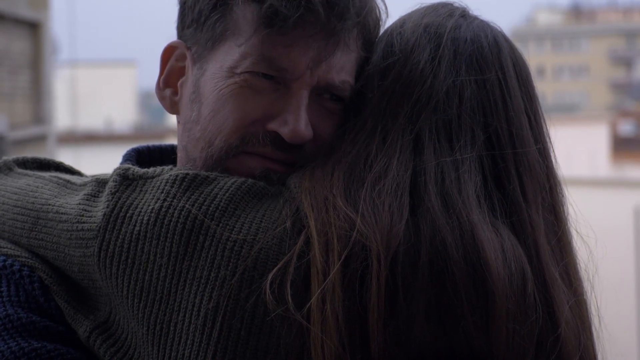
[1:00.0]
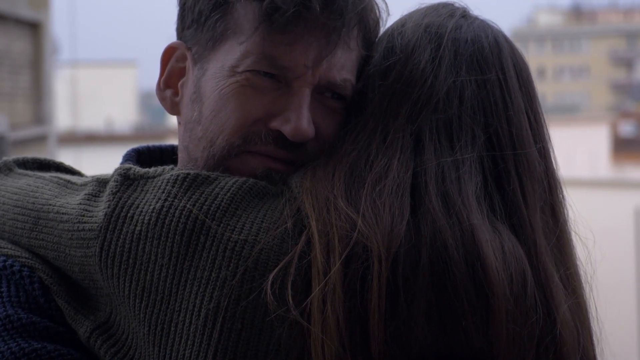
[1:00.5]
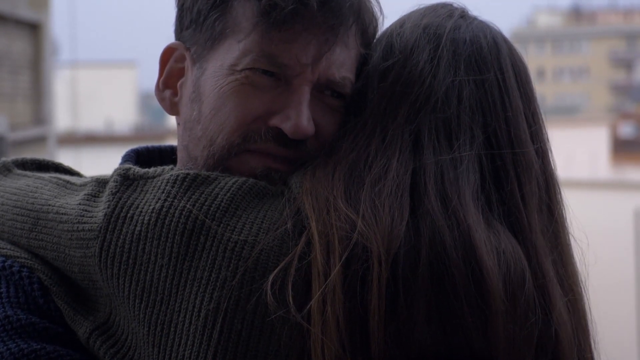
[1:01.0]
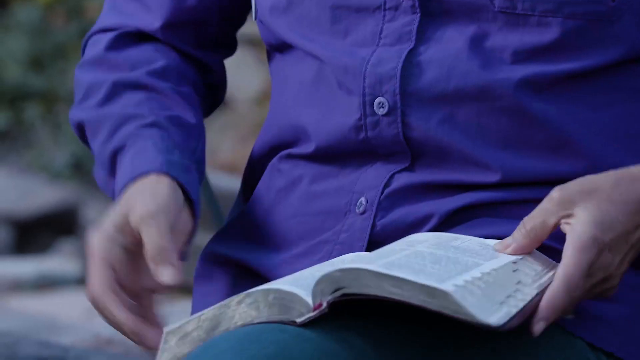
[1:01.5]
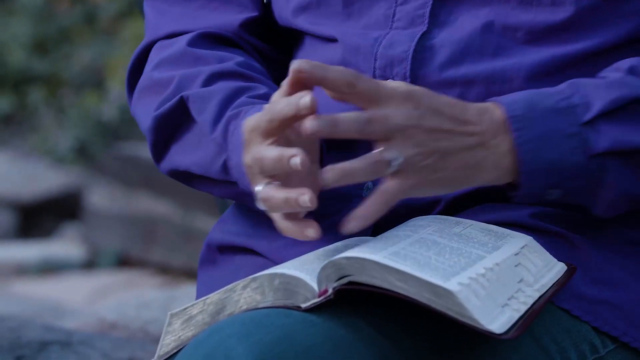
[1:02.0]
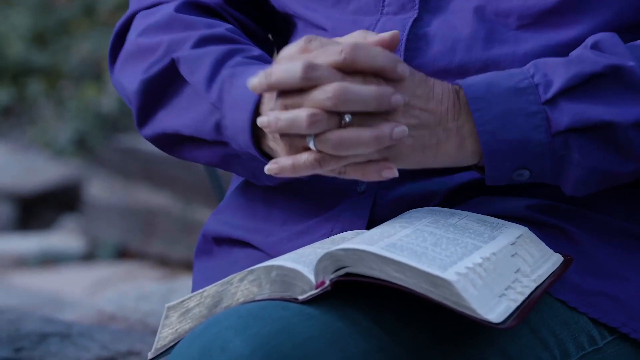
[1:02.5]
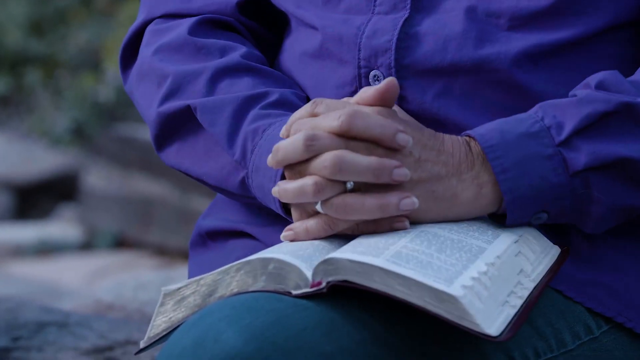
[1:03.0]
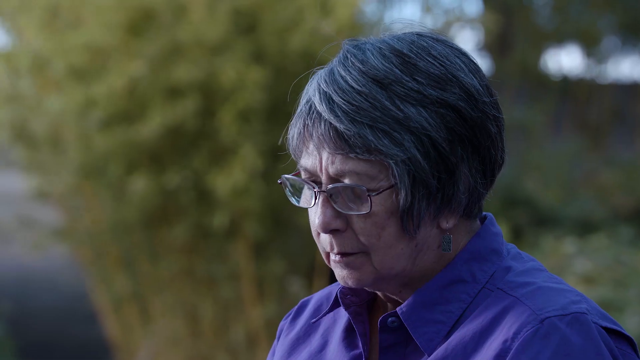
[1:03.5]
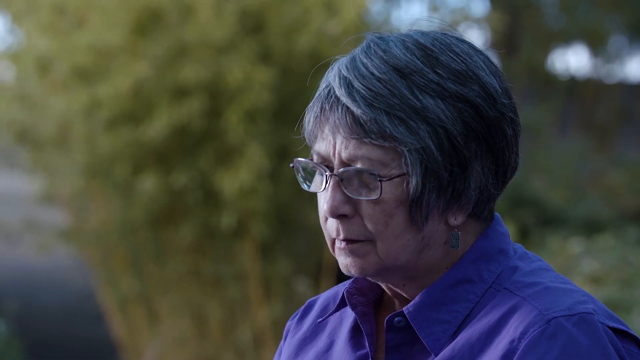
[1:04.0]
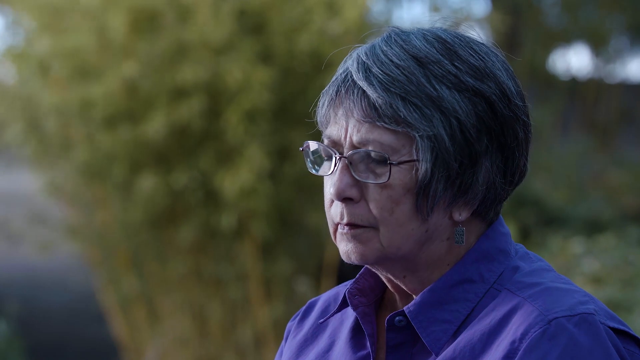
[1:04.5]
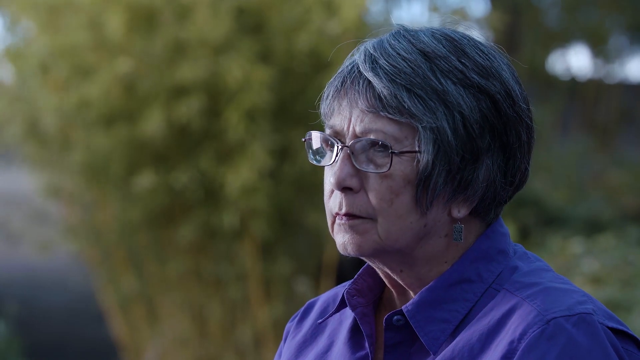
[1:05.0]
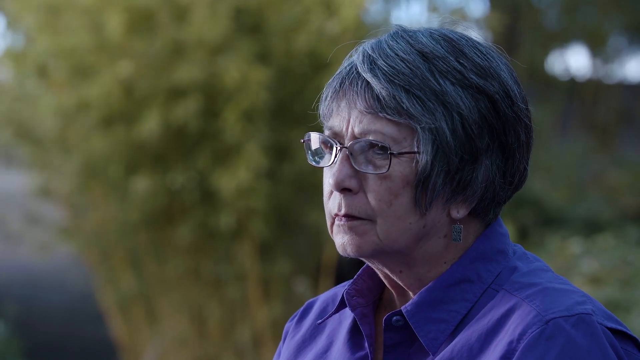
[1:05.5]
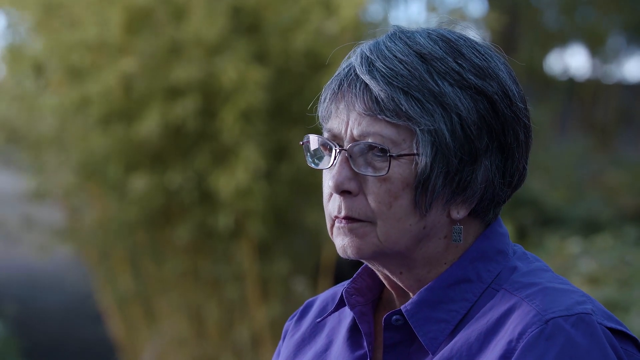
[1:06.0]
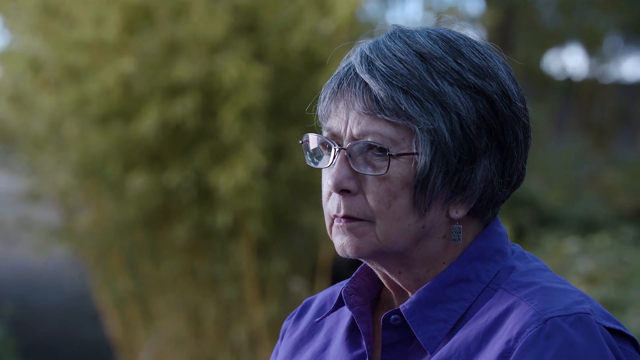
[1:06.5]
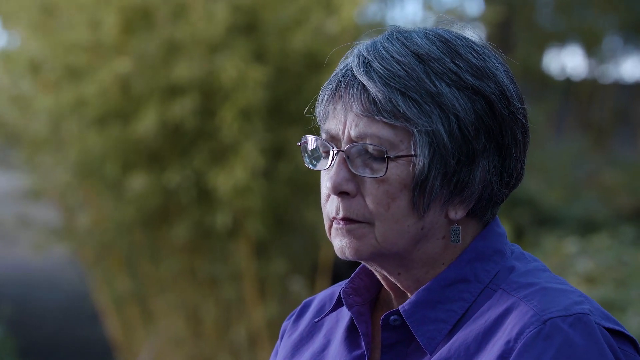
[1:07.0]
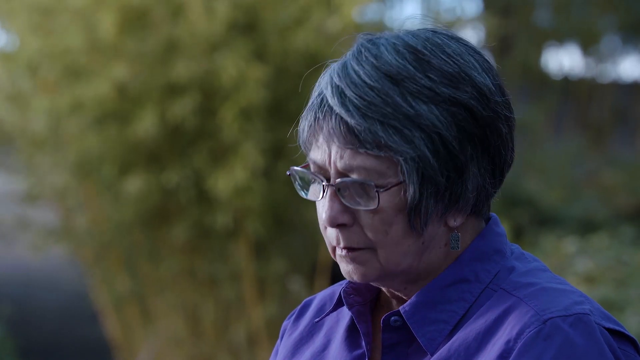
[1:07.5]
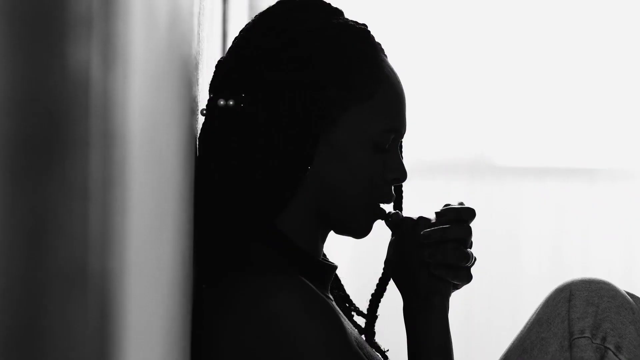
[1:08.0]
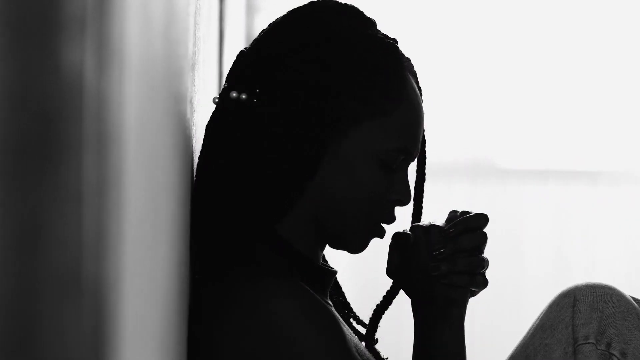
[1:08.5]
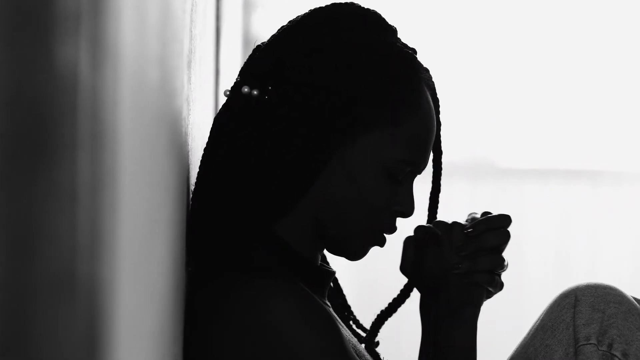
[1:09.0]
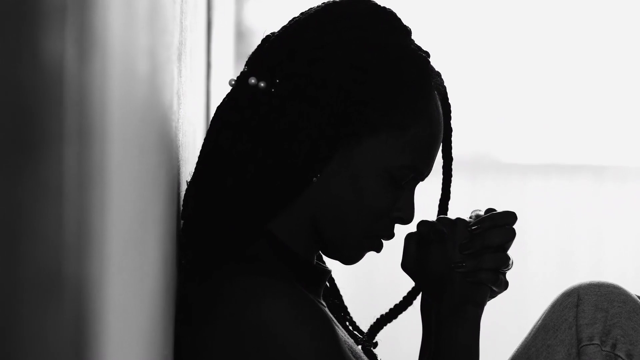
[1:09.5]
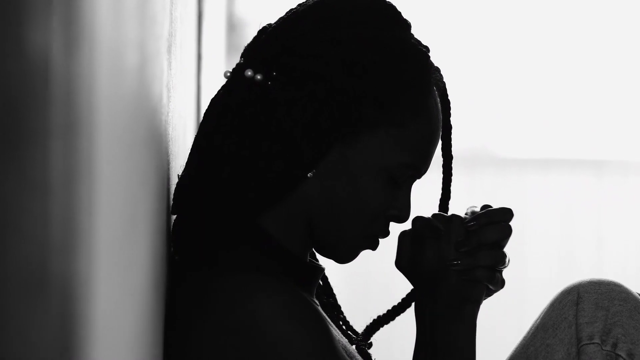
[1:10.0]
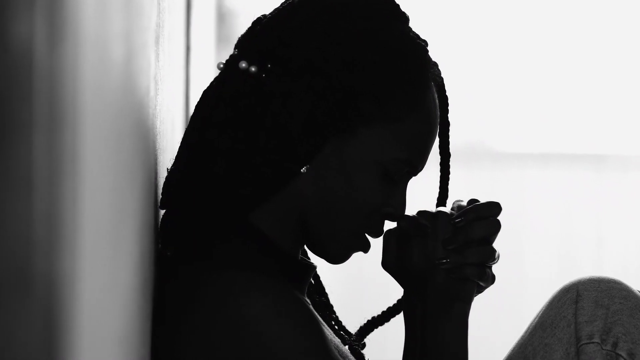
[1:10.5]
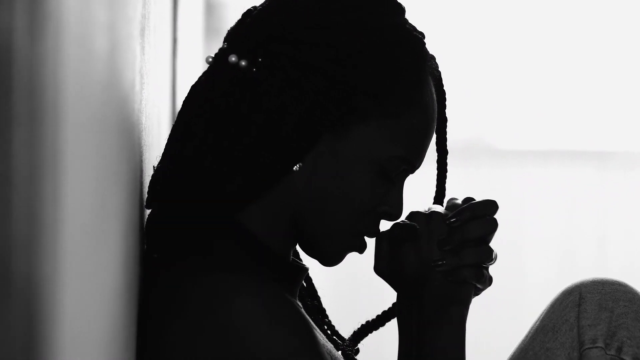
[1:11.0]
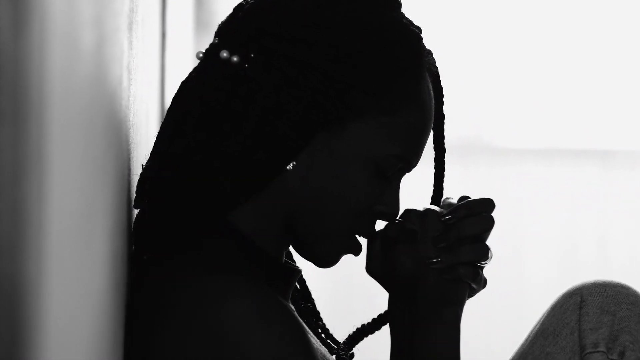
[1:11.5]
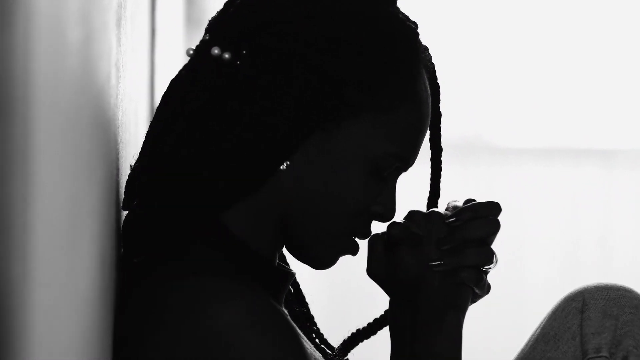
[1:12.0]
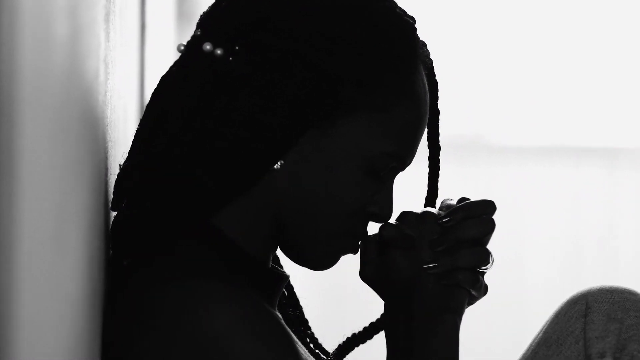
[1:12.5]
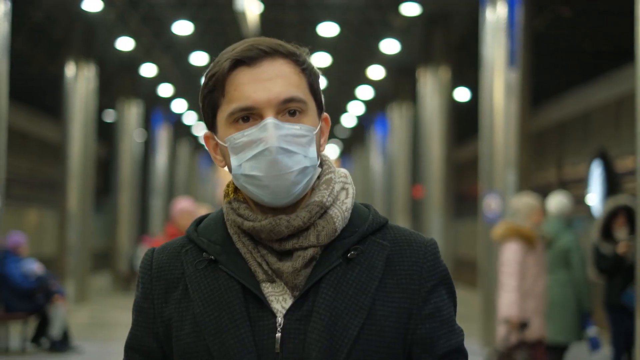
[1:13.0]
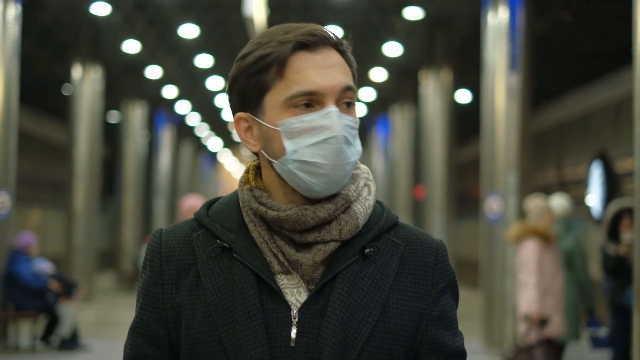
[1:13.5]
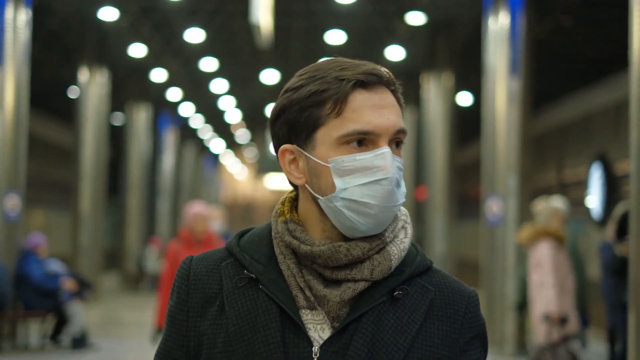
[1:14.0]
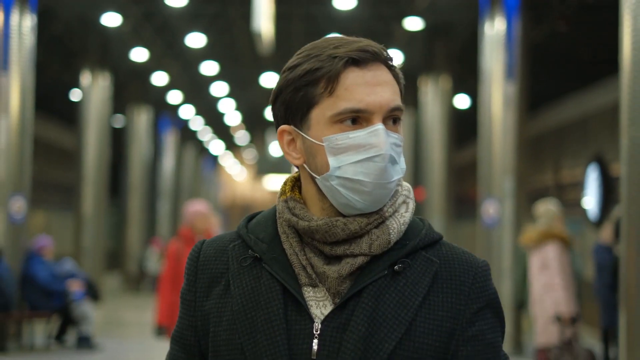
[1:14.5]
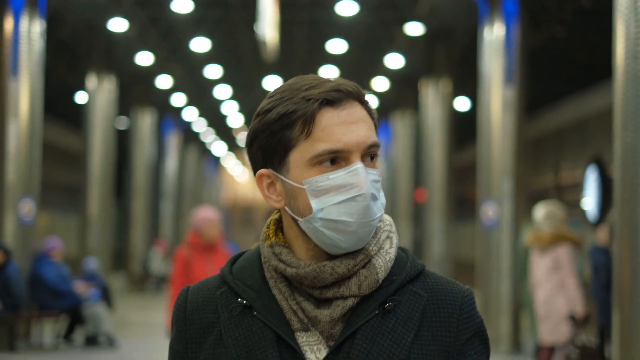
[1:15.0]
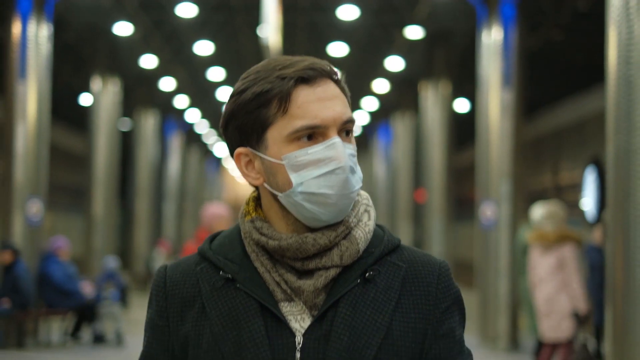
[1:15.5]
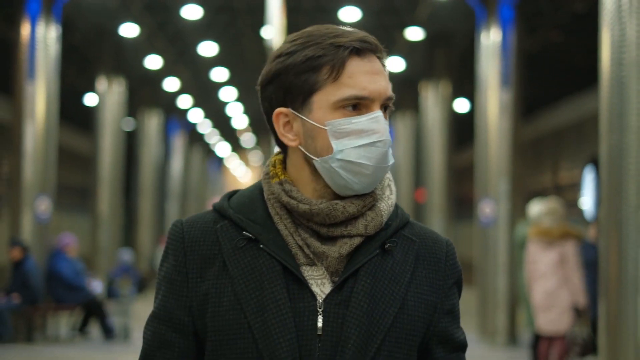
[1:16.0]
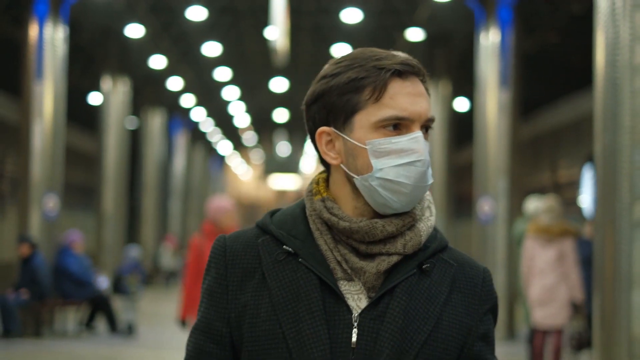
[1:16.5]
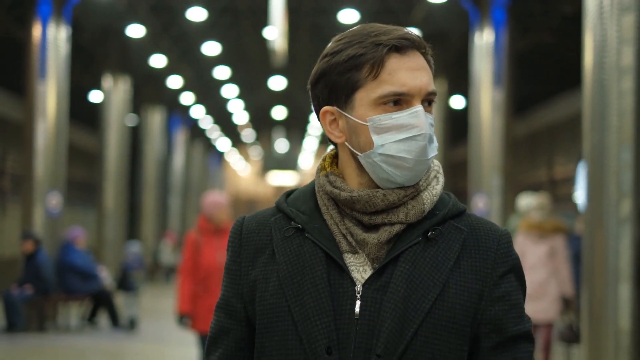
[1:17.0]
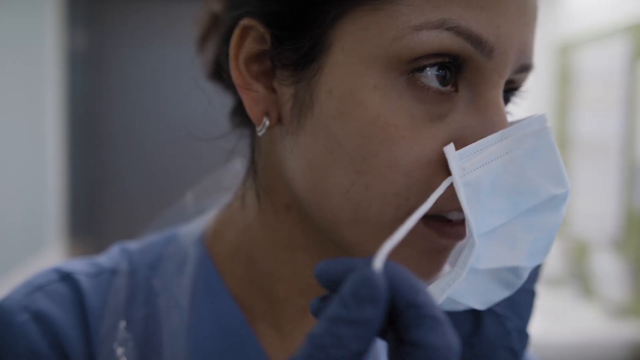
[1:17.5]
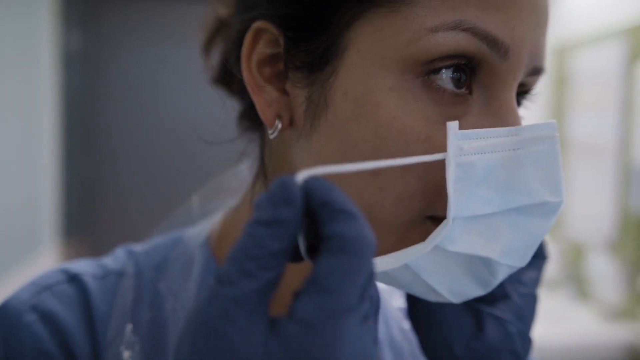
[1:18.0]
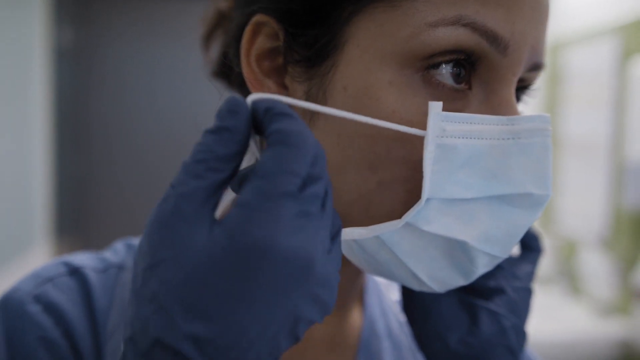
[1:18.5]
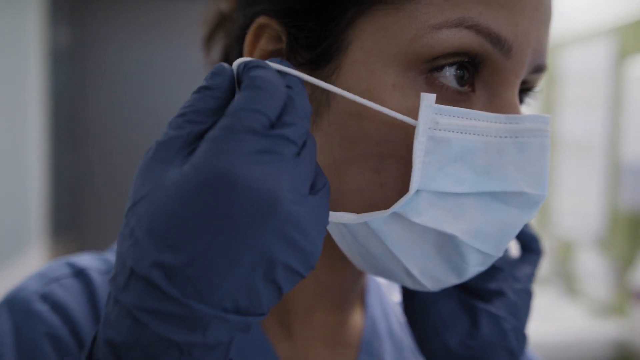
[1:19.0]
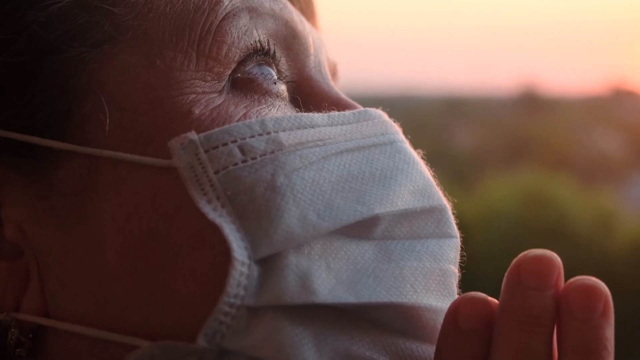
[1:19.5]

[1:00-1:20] The text "Voice of Dieter F. Uchtdorf, the Quorum of the Twelve Apostles" appears; the video seems to be about COVID. A man hugs a woman with long brown hair. A different person in a blue shirt crosses their hands in prayer with a Bible on their lap; when the face is shown, it turns out to be a woman with short gray hair. A Black woman with braids sits on the ground in front of a window, in silhouette, praying and moving her hands back and forth. A man, possibly in an airport, walks toward the camera wearing a peacoat-like jacket with a hood, a brown scarf and a face mask. A hospital worker puts on a mask. An older woman wears a mask.